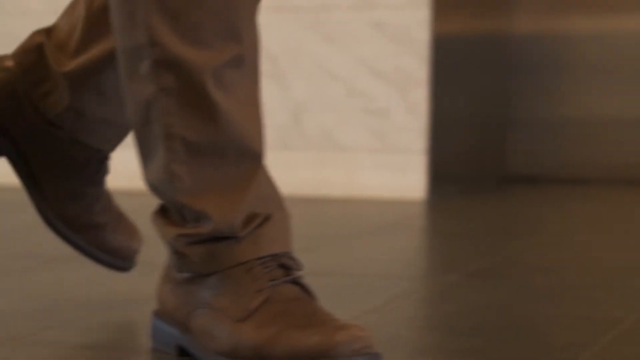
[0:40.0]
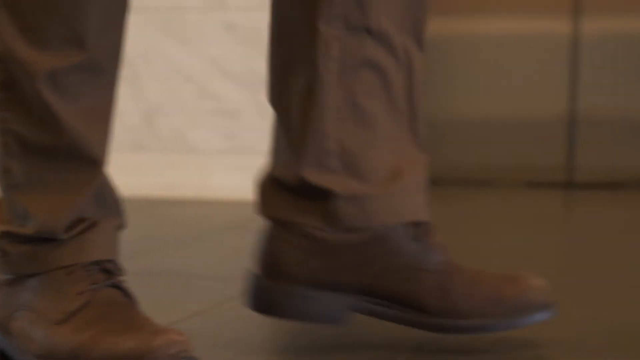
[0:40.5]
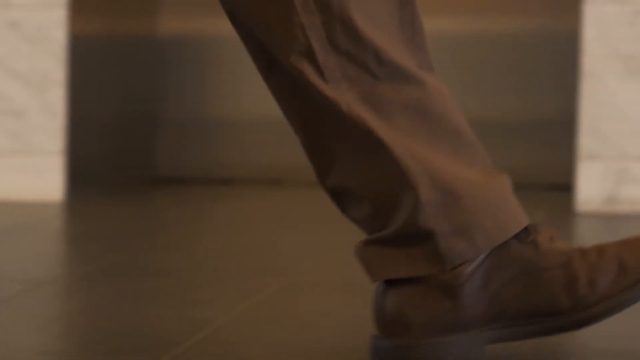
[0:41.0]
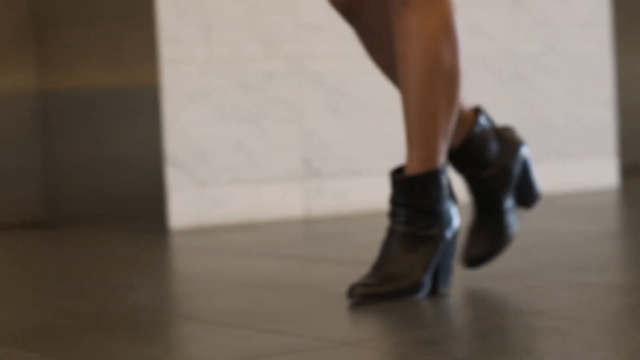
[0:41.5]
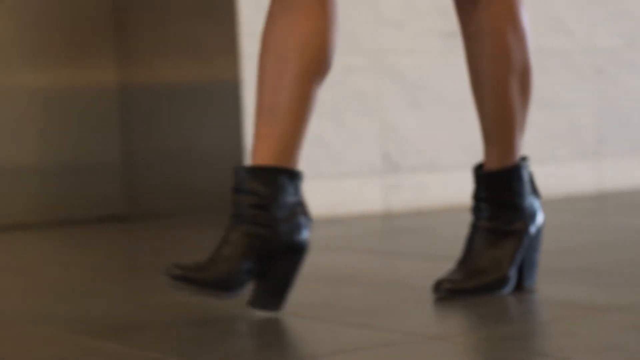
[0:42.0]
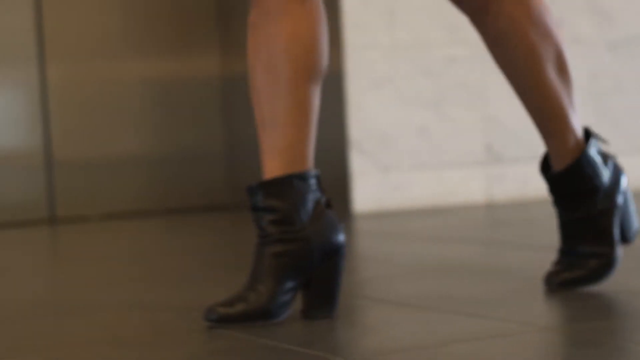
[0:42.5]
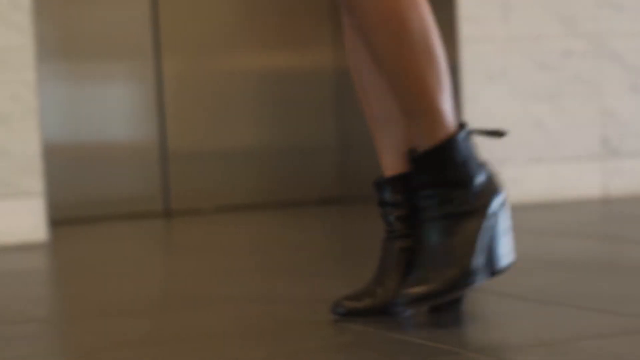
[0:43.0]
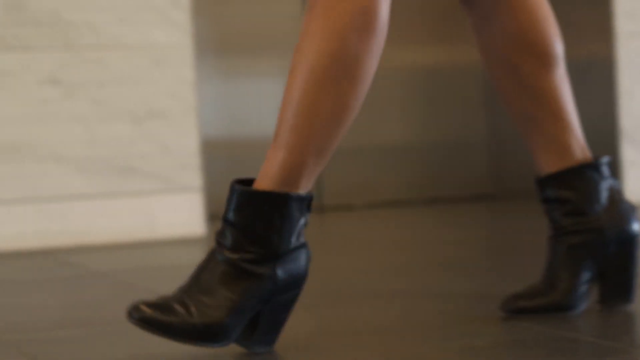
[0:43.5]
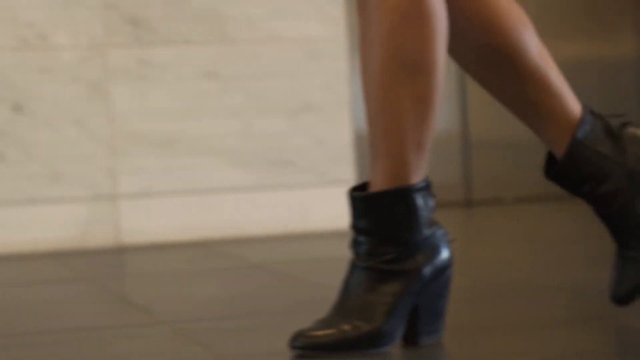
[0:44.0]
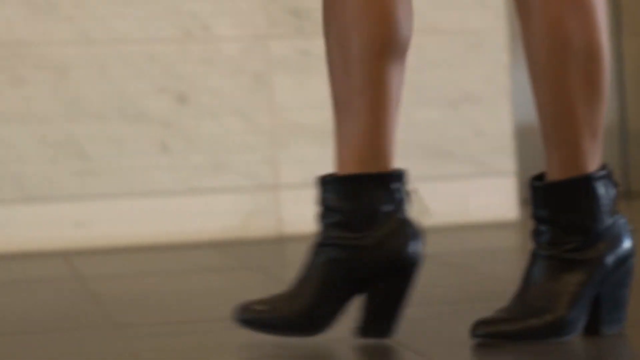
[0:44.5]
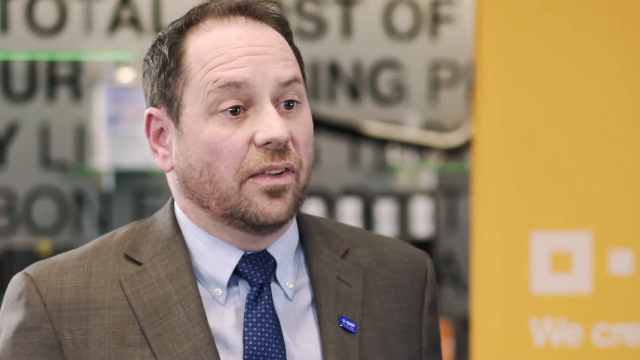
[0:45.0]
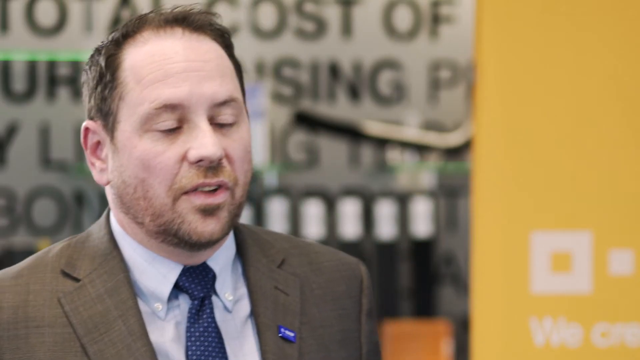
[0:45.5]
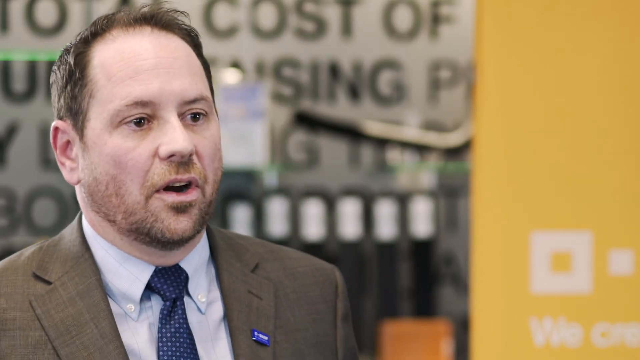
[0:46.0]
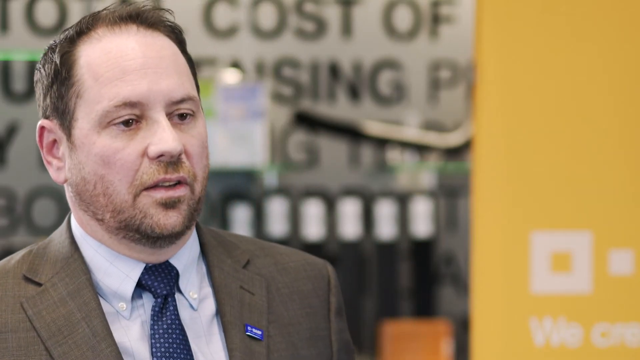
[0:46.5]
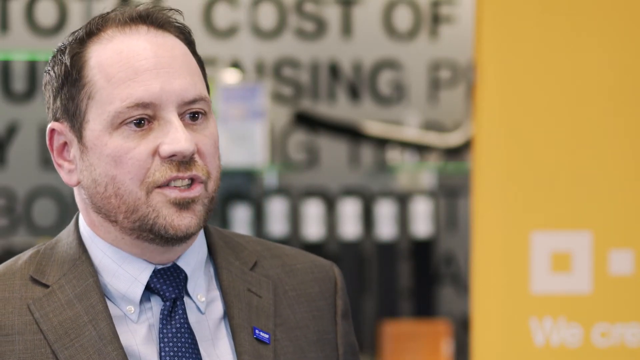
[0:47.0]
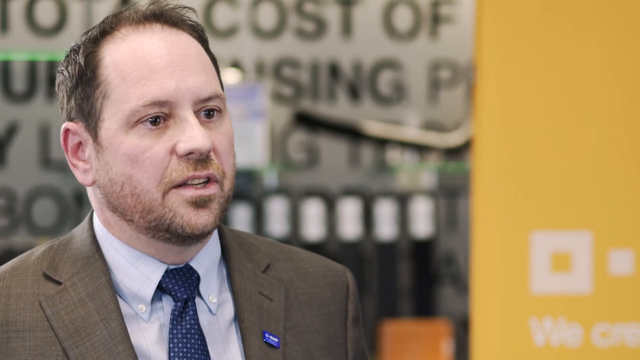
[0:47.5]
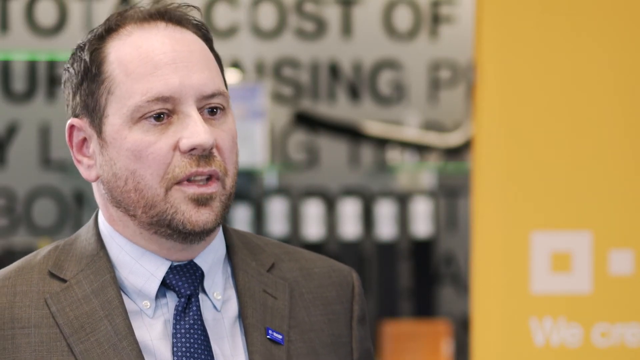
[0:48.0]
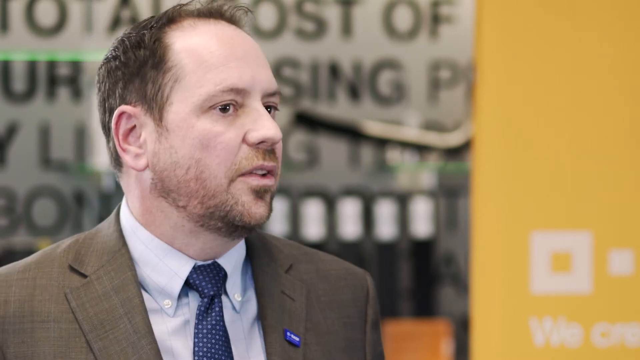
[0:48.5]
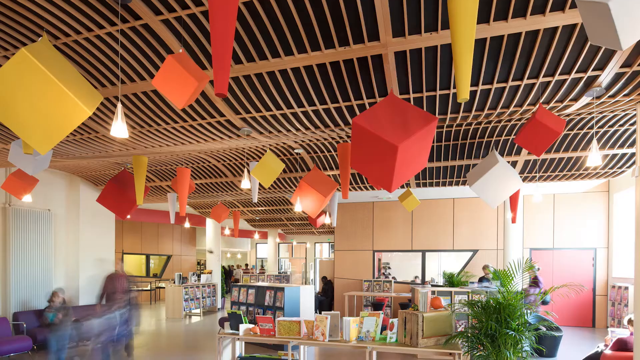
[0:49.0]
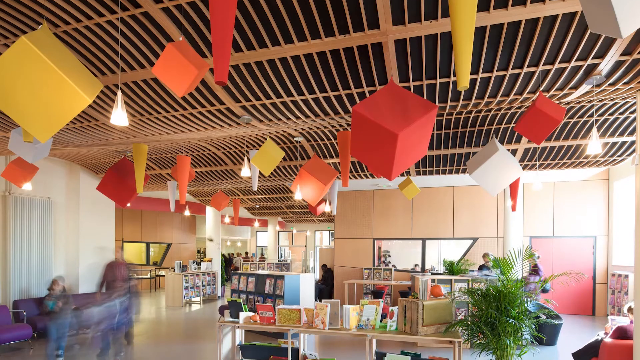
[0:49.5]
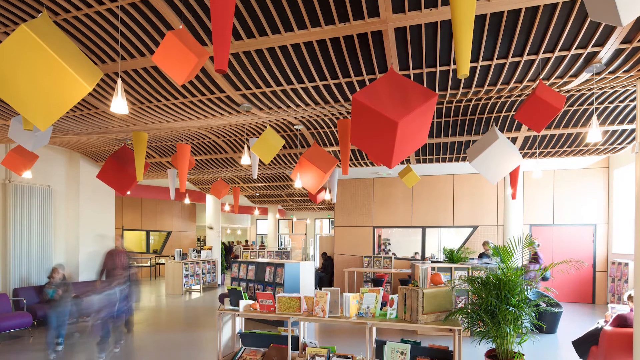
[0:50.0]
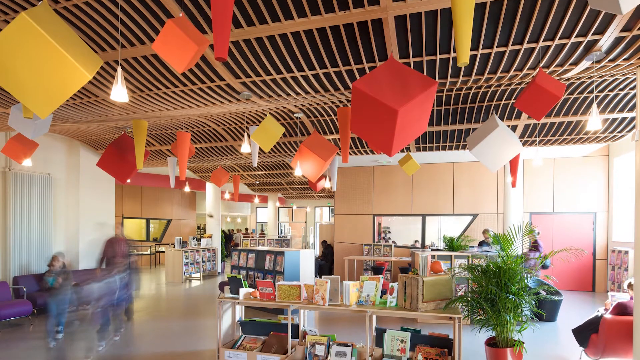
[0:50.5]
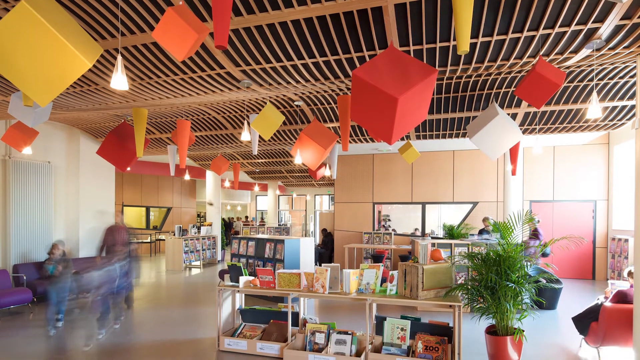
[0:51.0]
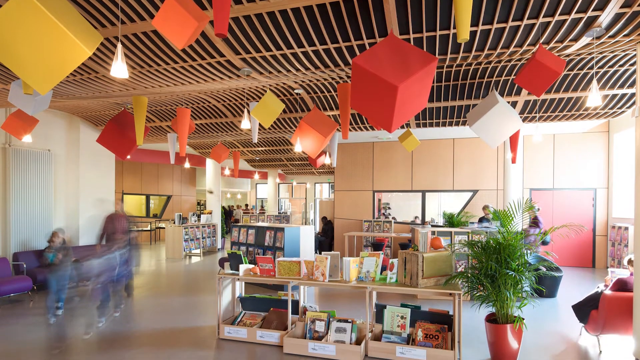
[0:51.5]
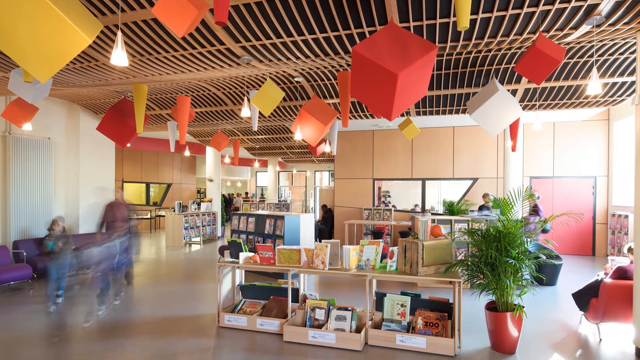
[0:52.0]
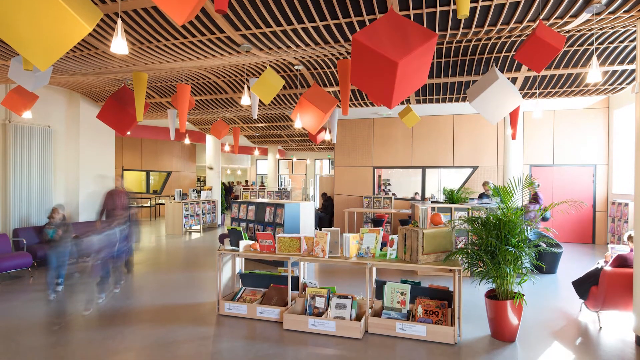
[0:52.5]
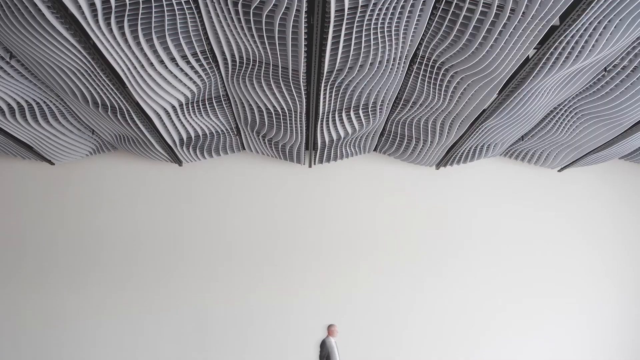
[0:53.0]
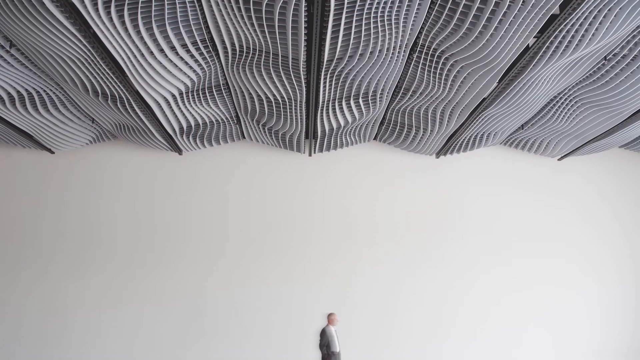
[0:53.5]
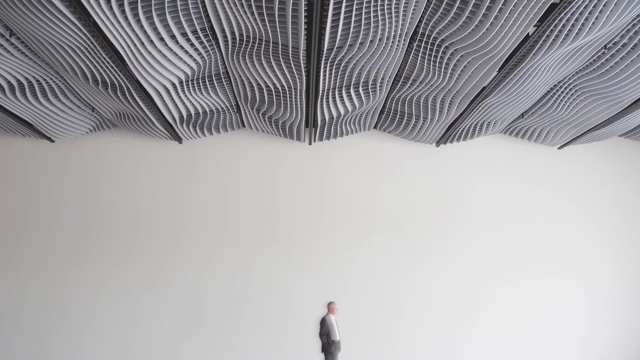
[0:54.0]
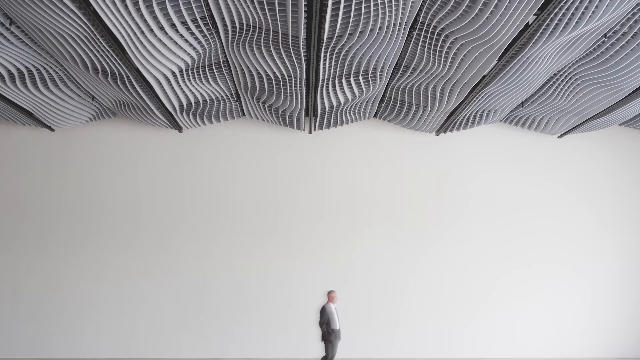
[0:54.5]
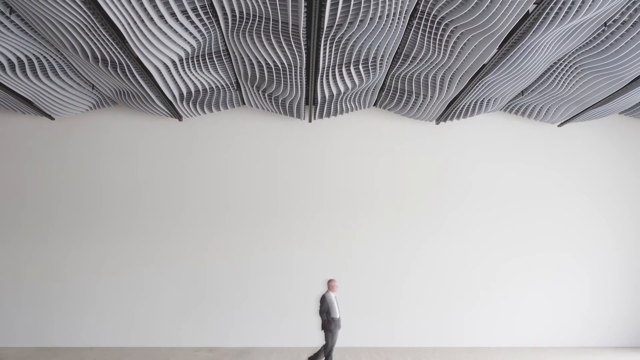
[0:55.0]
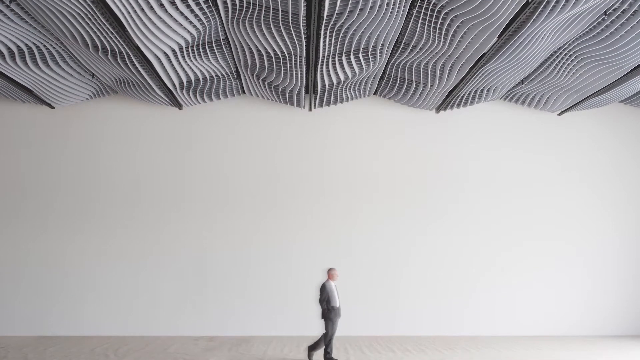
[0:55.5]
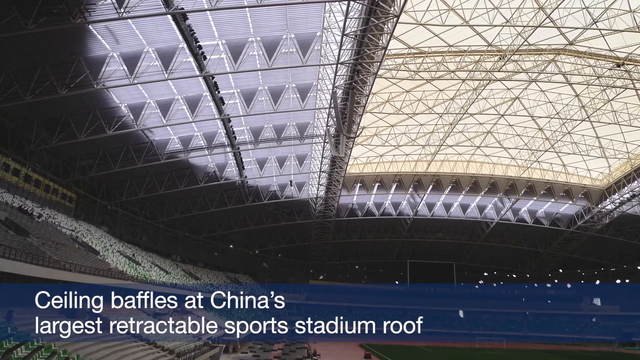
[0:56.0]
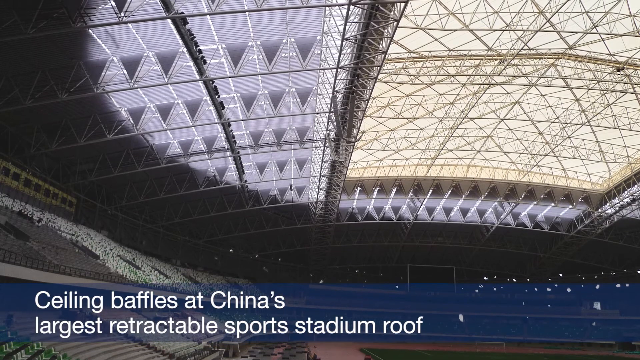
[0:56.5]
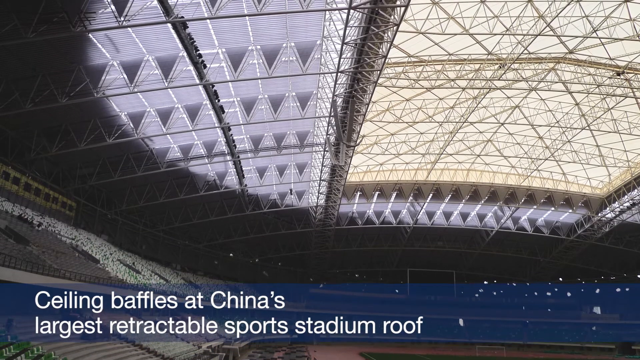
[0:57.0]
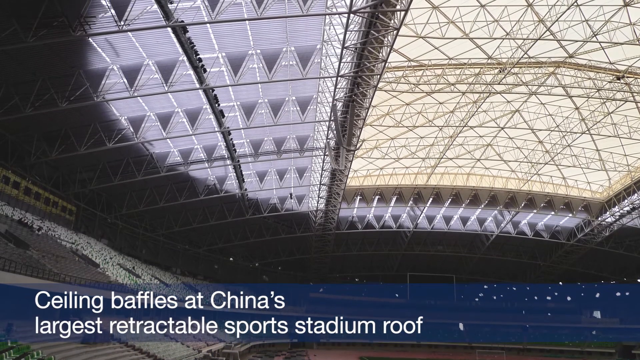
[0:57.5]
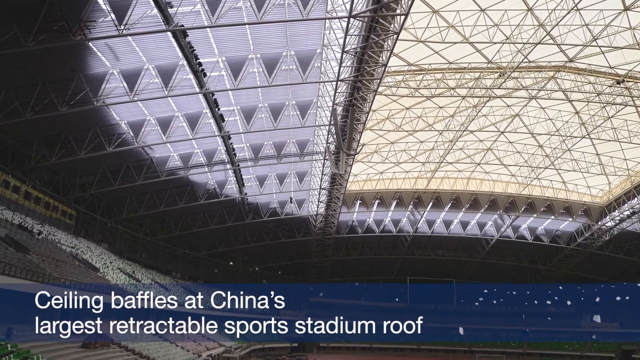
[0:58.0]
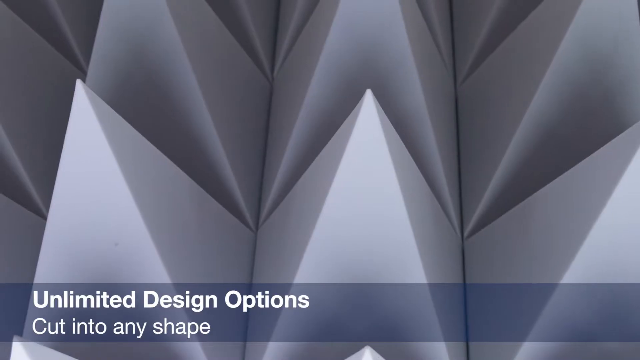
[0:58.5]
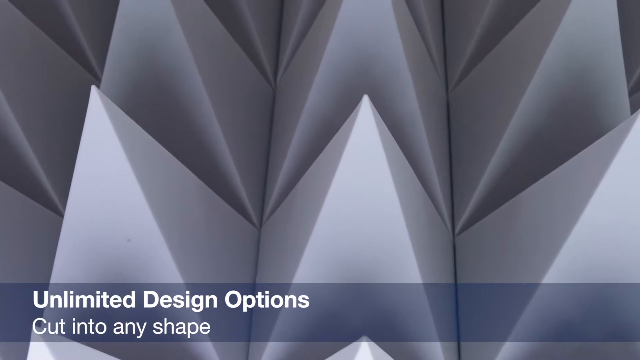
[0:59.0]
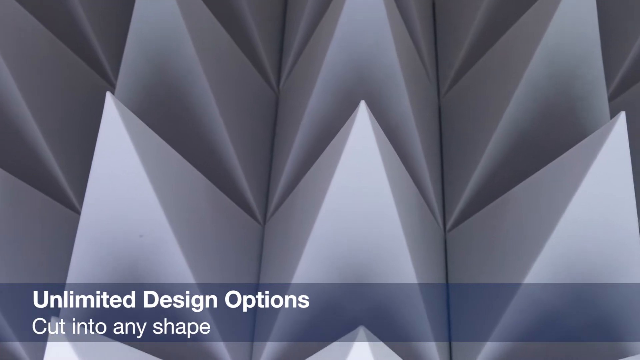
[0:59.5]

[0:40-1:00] Many people roam around a very big train station building in front of where tickets are bought. The video appears to come from BASF, a company that does chemistry work, with "we create chemistry" below its name. A man who looks to be in his 40s, Doyle Robertson, is talking; he is an expert on melamine foam in North America and works for BASF Corporation. In an office space full of people, two women and one man in front discuss something shown on a computer monitor, while many others in the background are busy working. Eight flags are shown in front of the BASF company building. A train passes by, and then many geometrically designed ceilings are shown.